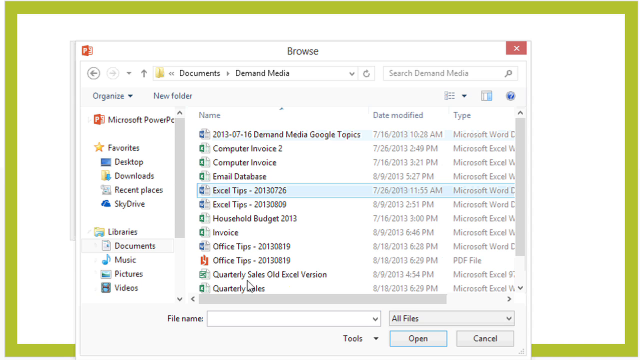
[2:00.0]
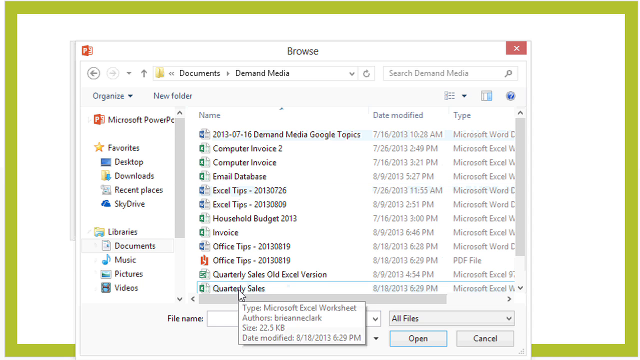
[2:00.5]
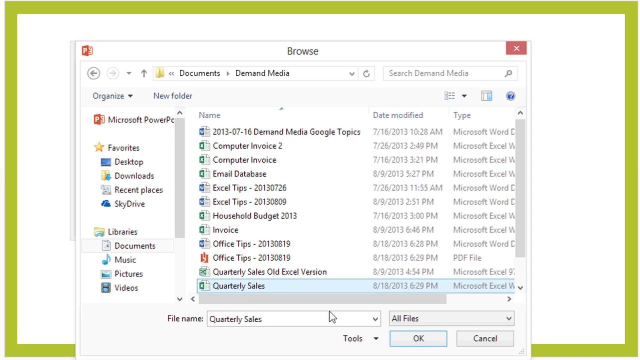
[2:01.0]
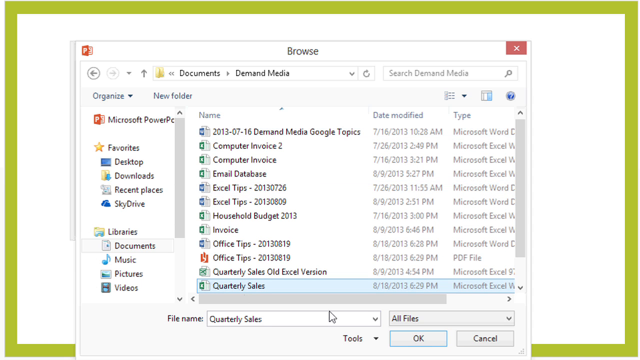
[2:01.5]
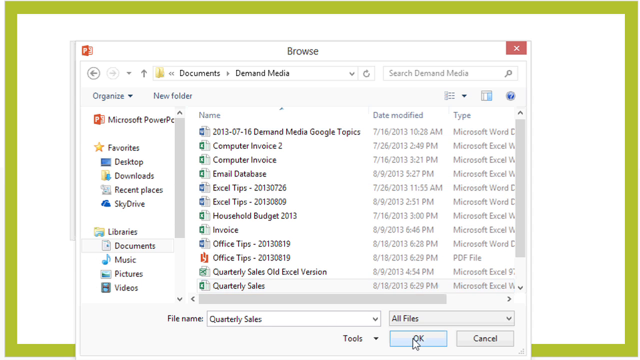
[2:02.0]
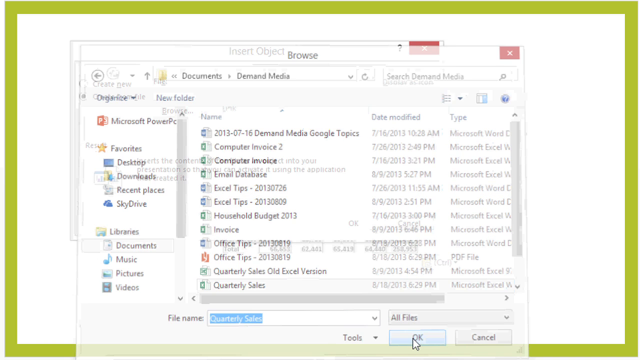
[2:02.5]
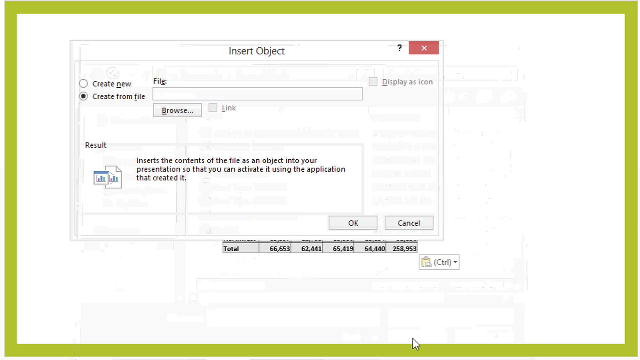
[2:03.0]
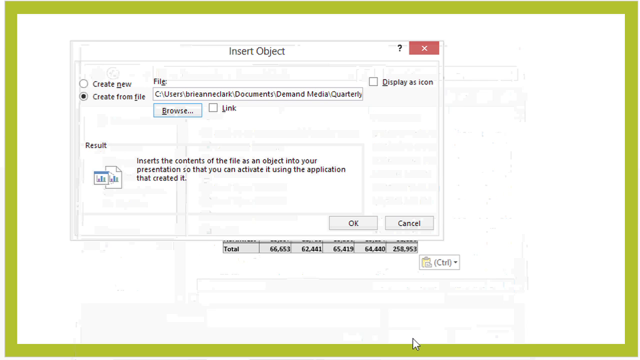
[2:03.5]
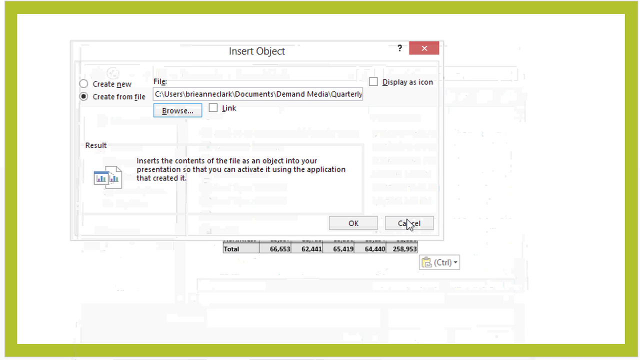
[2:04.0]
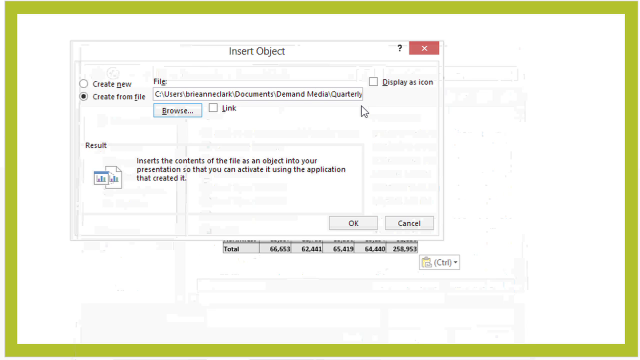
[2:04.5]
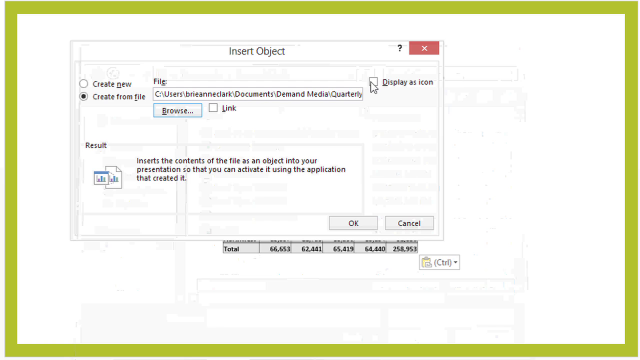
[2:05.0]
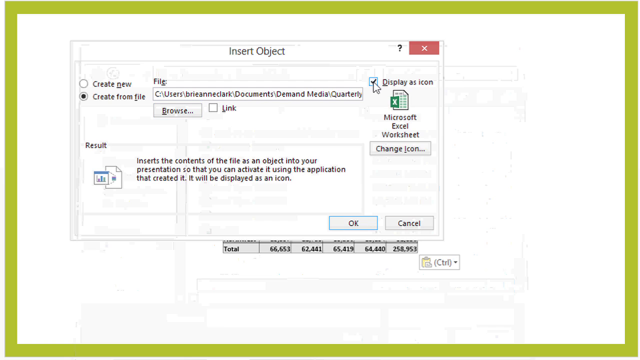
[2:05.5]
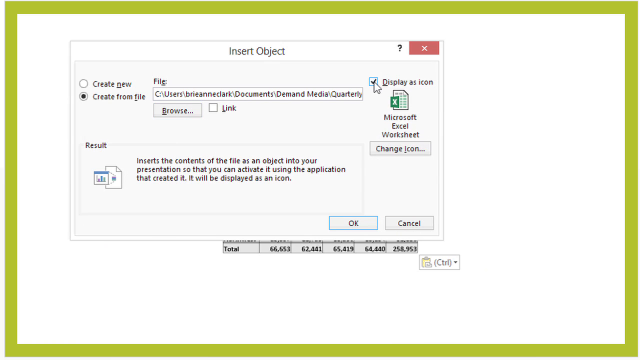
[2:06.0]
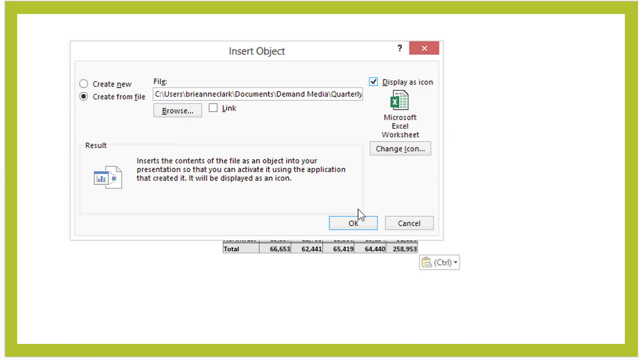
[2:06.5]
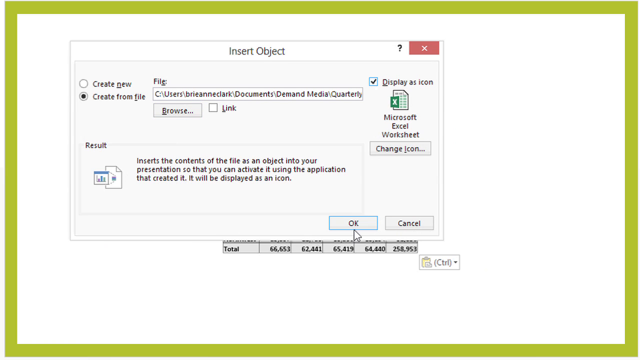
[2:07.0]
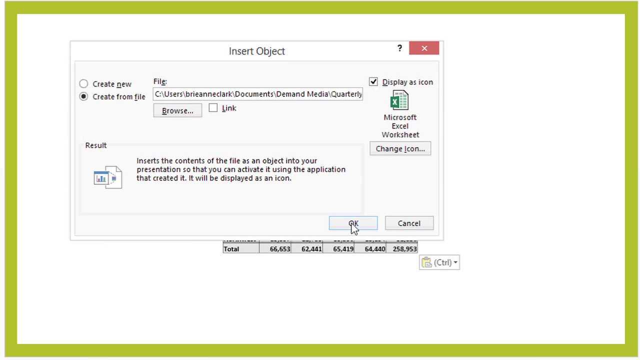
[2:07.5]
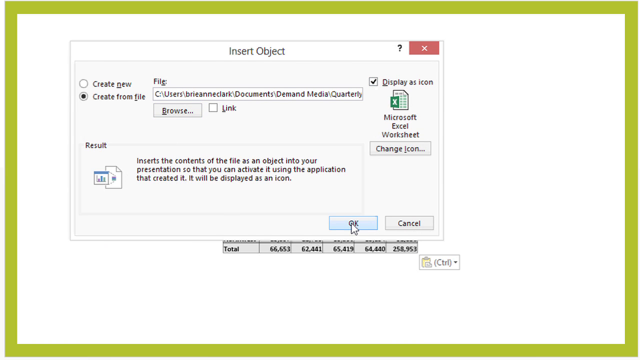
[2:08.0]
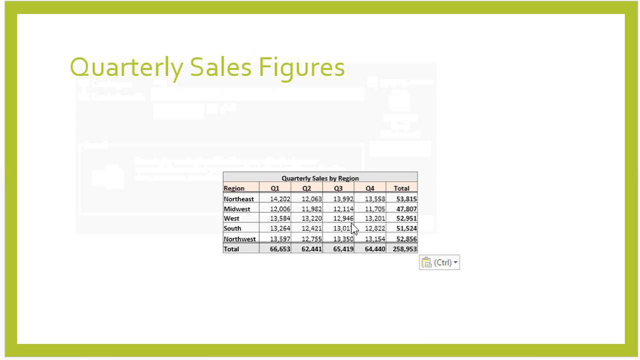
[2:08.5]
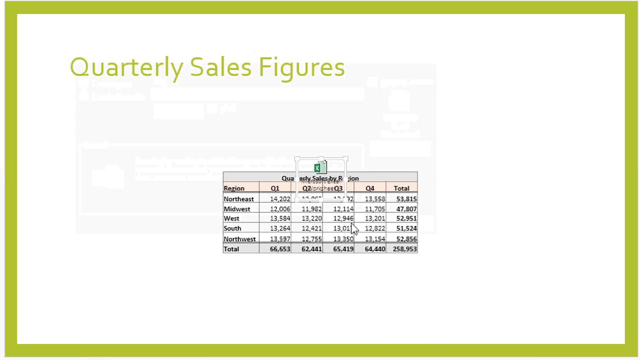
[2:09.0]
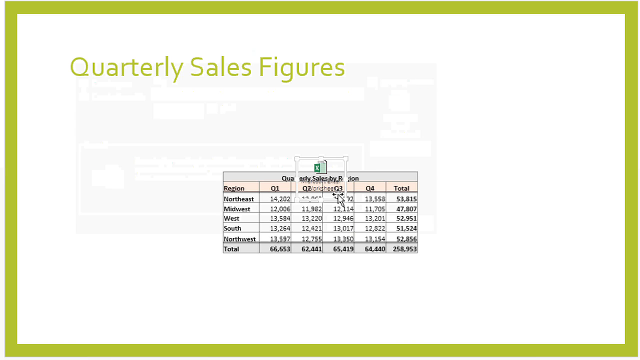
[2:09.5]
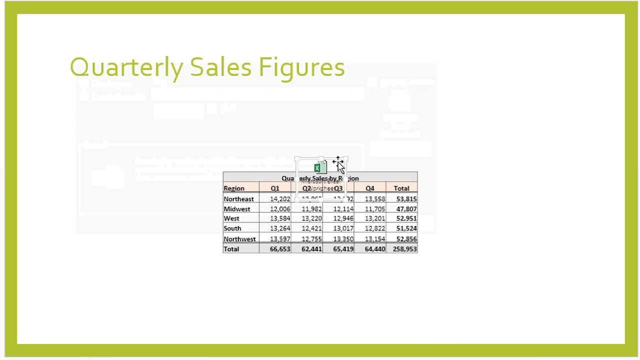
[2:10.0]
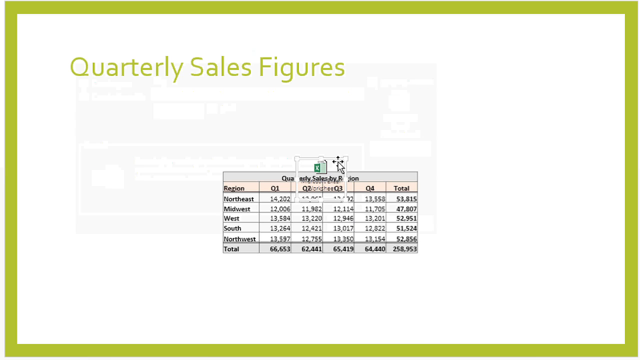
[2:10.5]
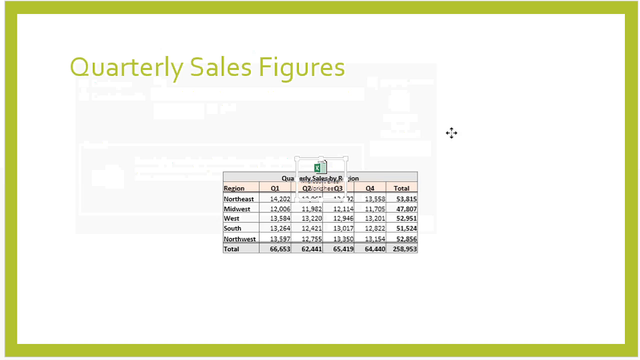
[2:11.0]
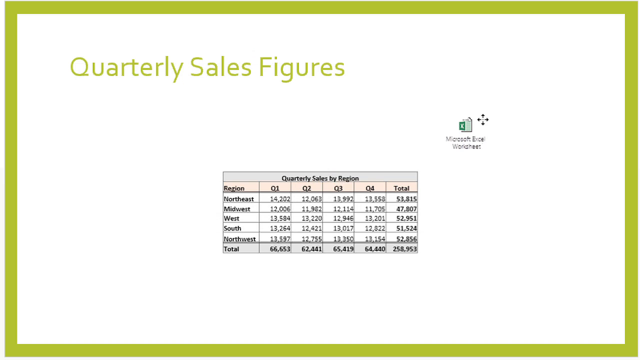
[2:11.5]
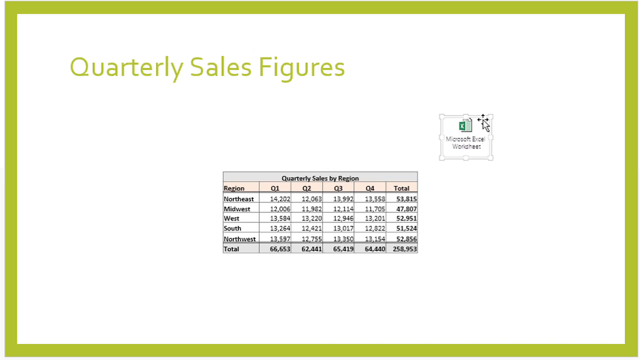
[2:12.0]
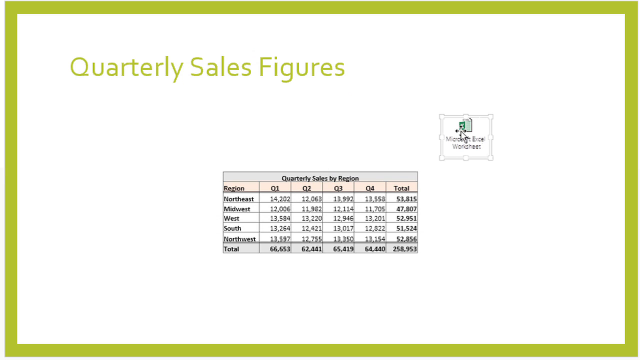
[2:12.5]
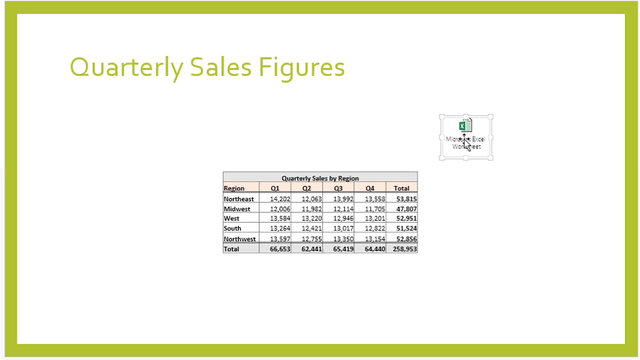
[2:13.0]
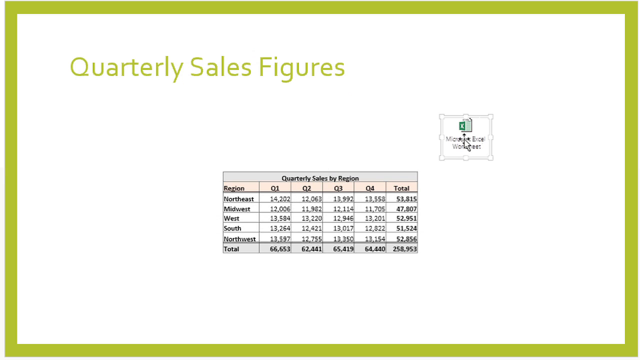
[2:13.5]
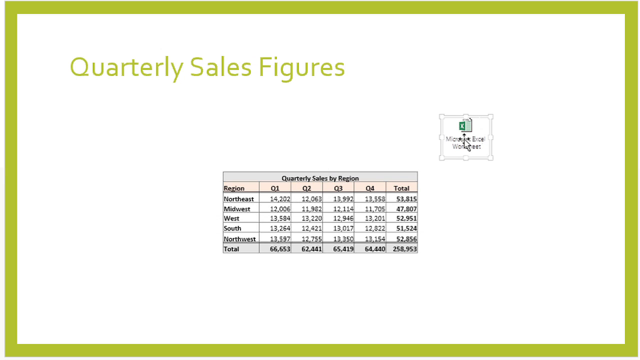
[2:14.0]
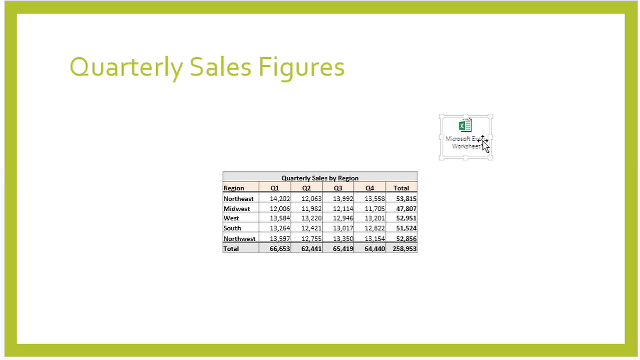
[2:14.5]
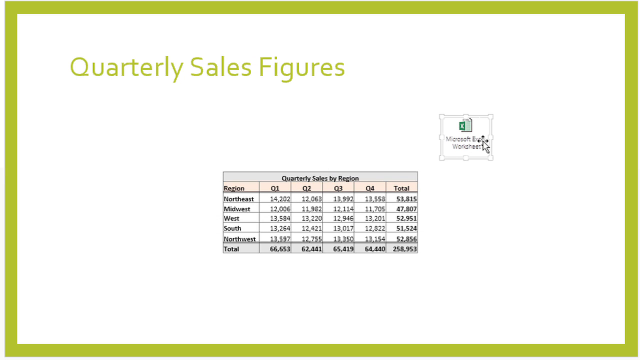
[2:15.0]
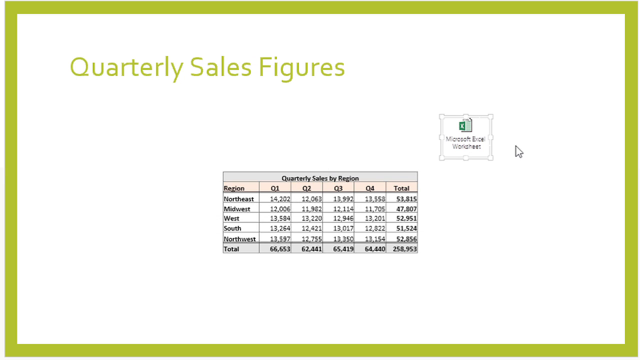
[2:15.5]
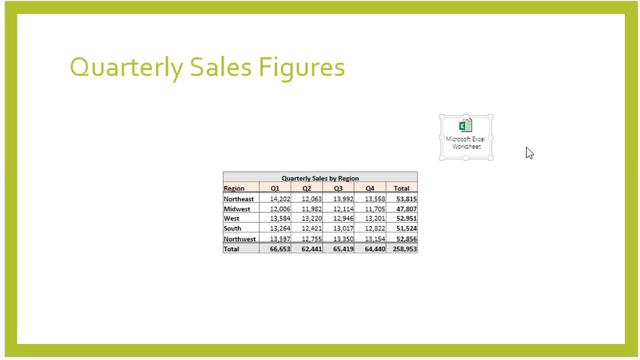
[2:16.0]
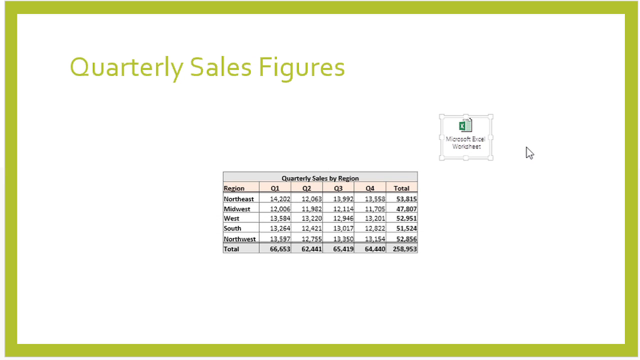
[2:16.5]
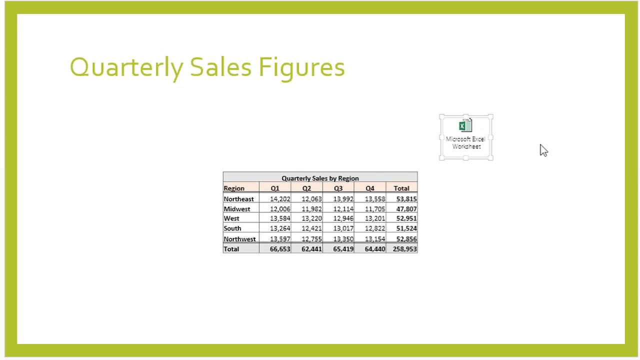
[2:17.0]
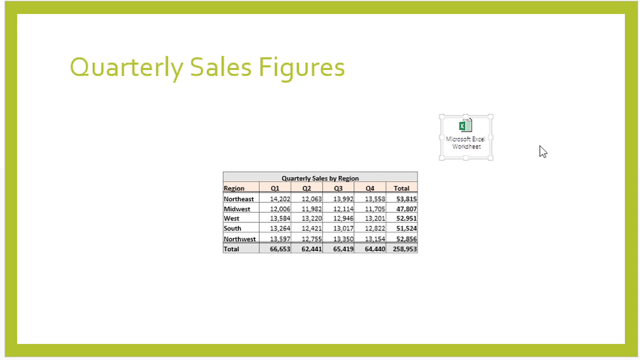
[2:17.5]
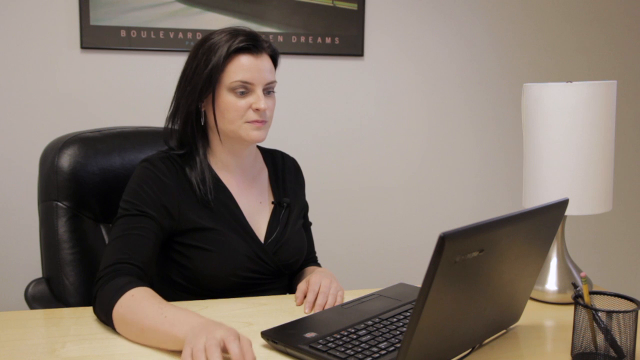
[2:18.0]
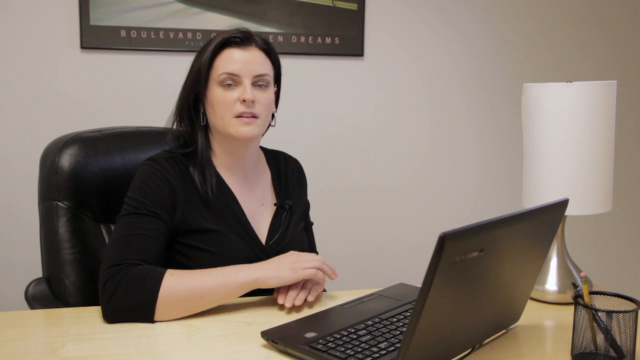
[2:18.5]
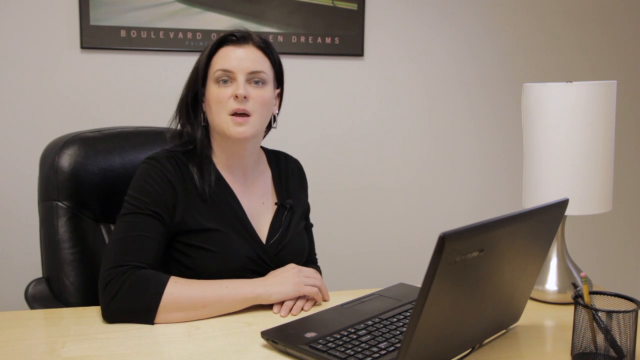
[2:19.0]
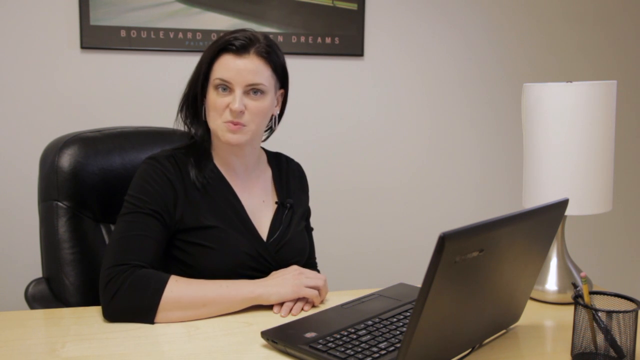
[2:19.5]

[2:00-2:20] Someone works on the computer as the cursor moves around. An insert object page brings up quarterly sales figures, and the cursor brings up pop-ups in the form of squares. The woman is shown working at her desk on the project; she looks at the camera and speaks. The cursor continues moving and inserting different things into the program. The quarterly sales graph by region appears, listing locations and the first, second, third and fourth quarters. A browse screen follows, with "Excel tips" highlighted in blue, for Microsoft Word, which leads to the next screen.